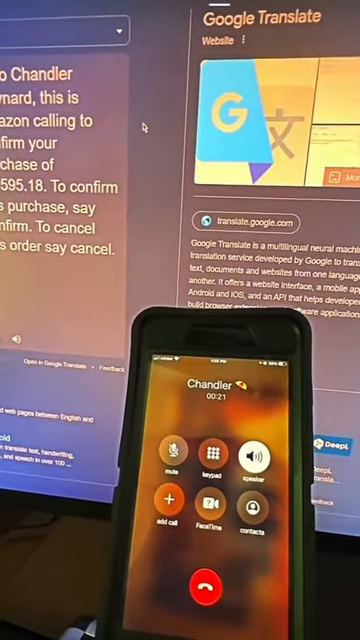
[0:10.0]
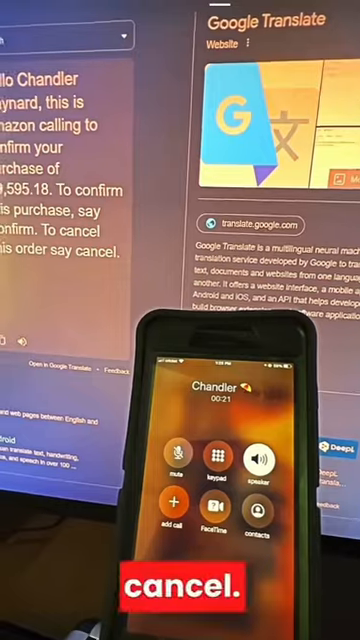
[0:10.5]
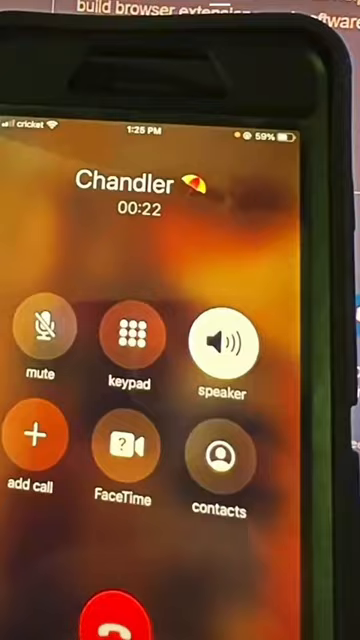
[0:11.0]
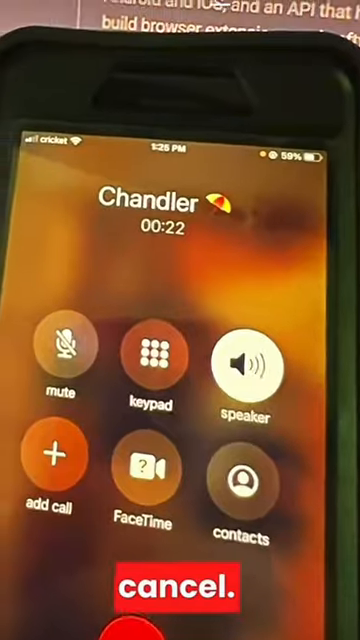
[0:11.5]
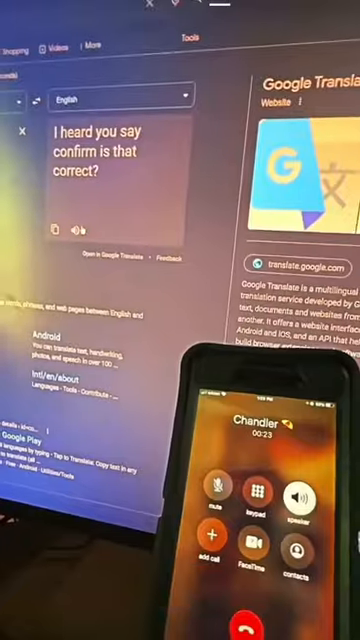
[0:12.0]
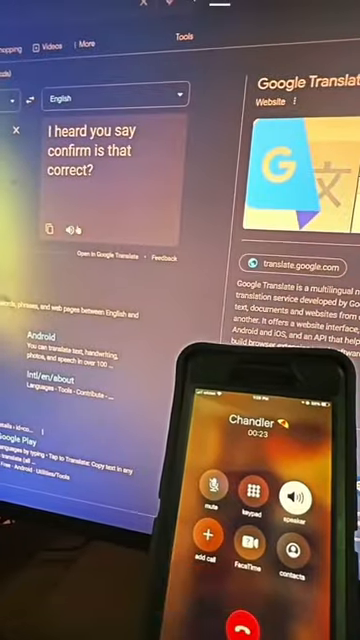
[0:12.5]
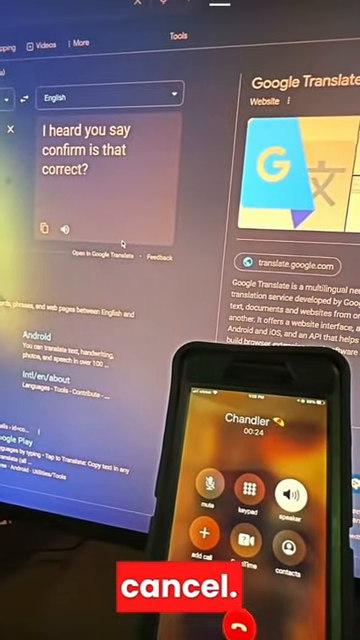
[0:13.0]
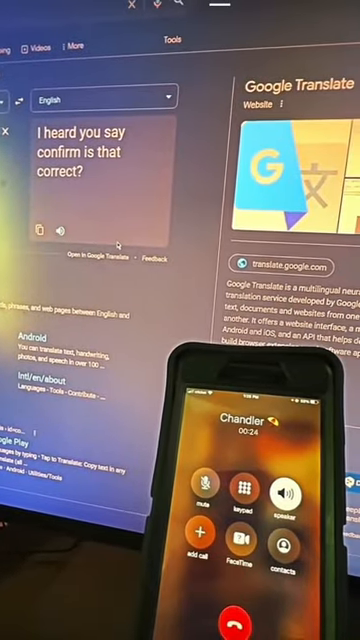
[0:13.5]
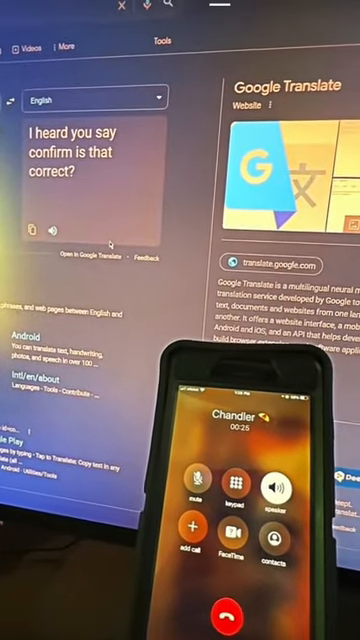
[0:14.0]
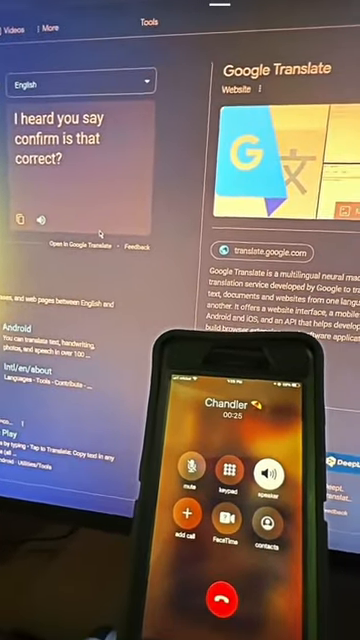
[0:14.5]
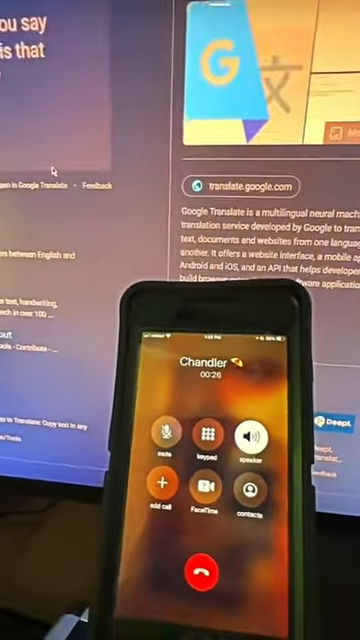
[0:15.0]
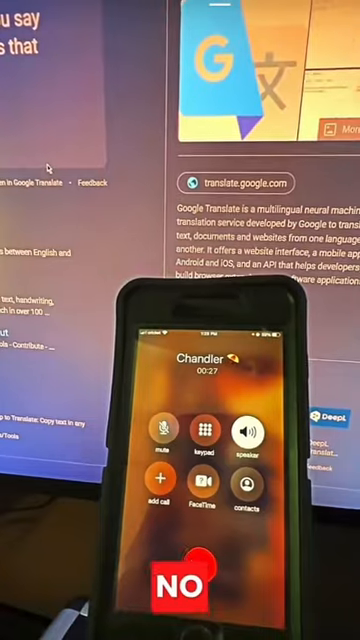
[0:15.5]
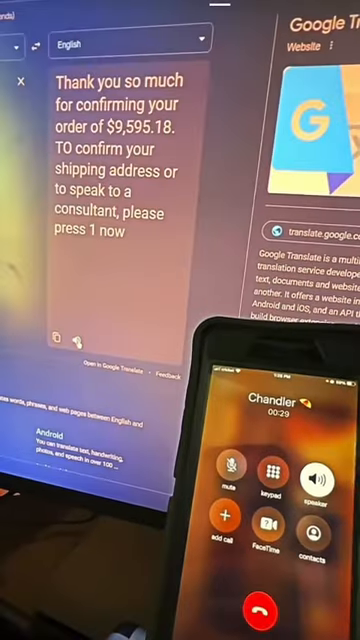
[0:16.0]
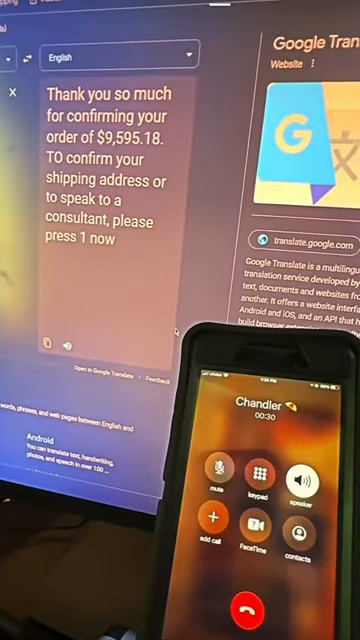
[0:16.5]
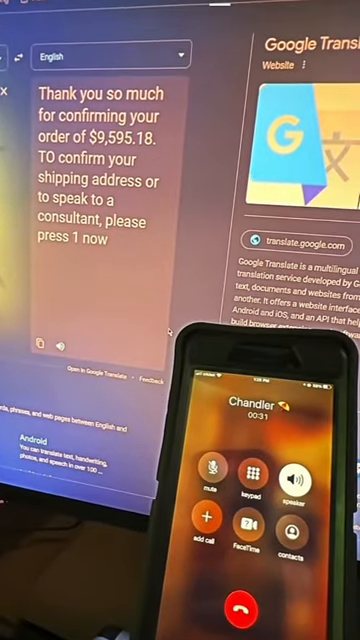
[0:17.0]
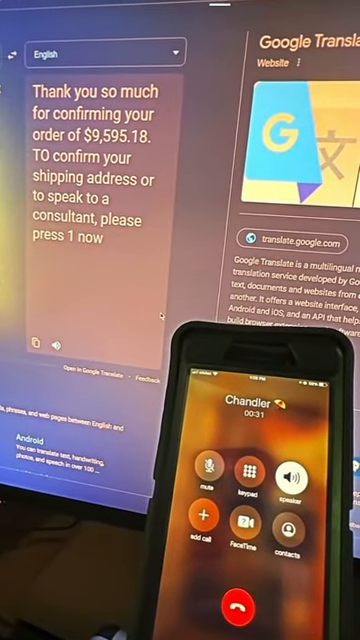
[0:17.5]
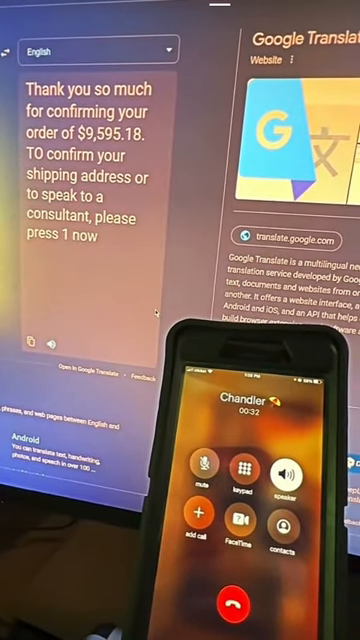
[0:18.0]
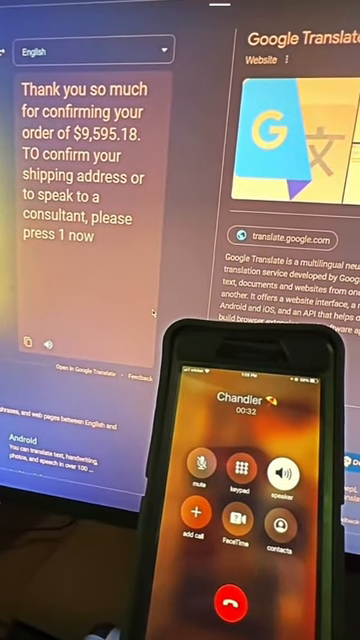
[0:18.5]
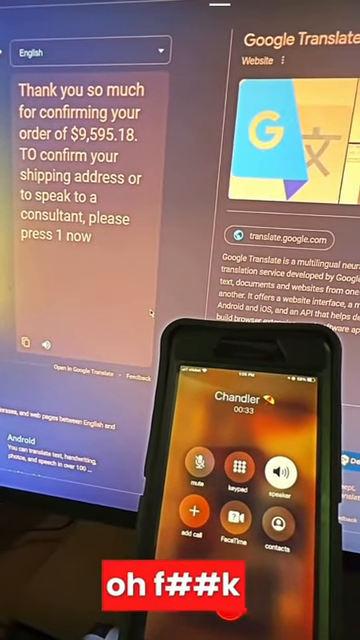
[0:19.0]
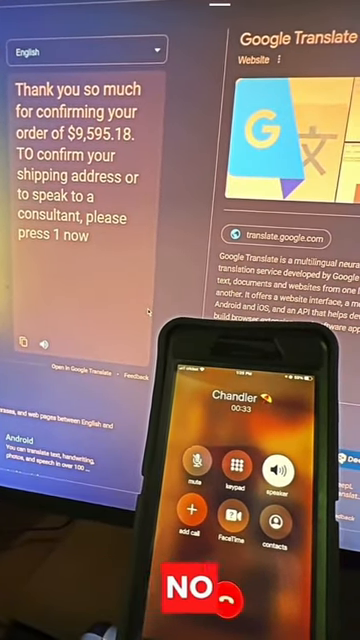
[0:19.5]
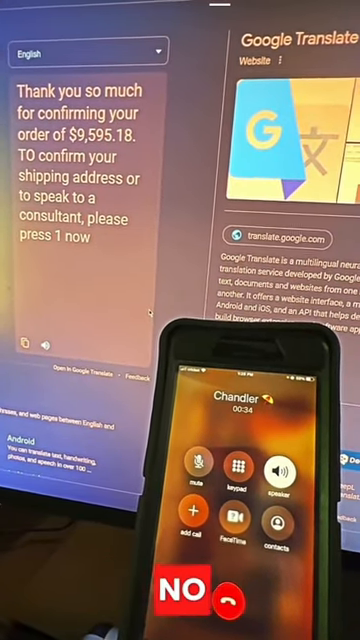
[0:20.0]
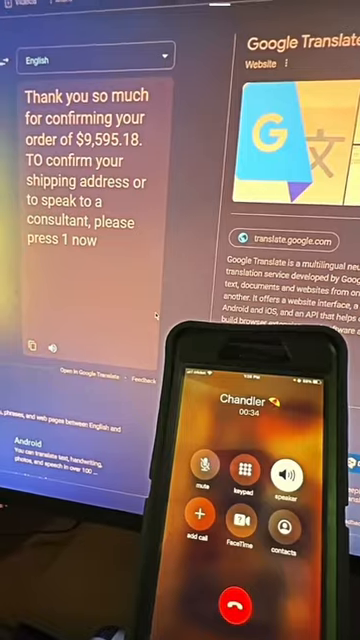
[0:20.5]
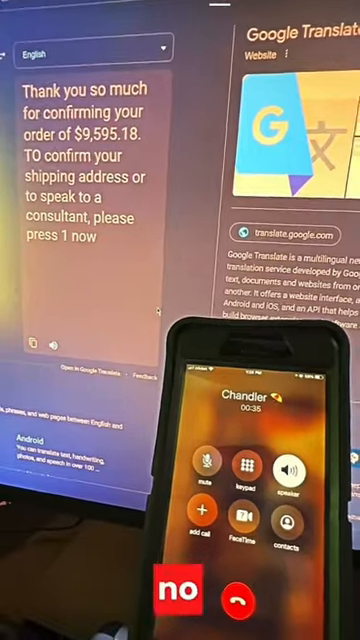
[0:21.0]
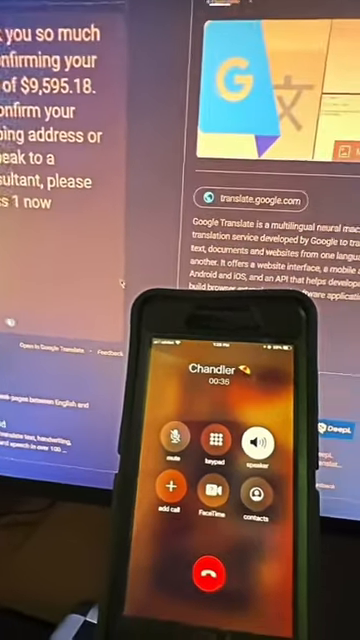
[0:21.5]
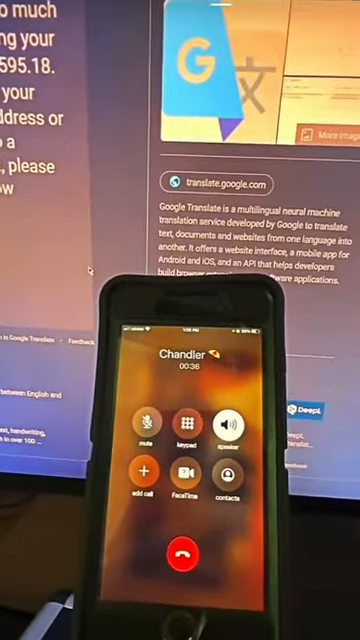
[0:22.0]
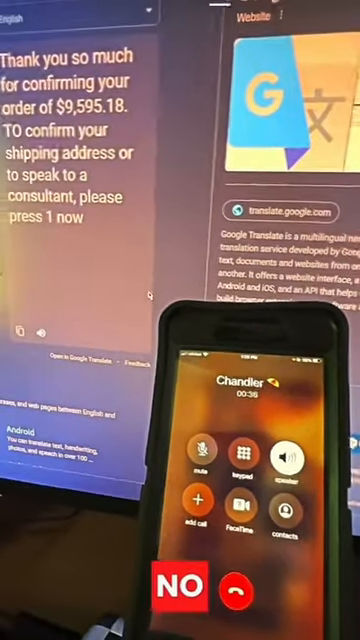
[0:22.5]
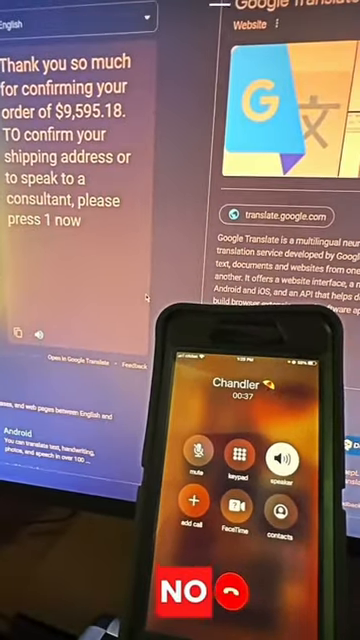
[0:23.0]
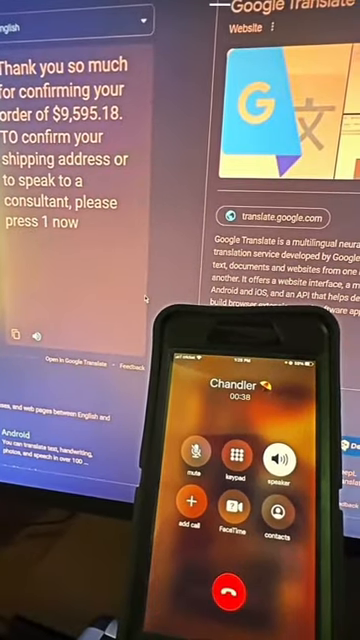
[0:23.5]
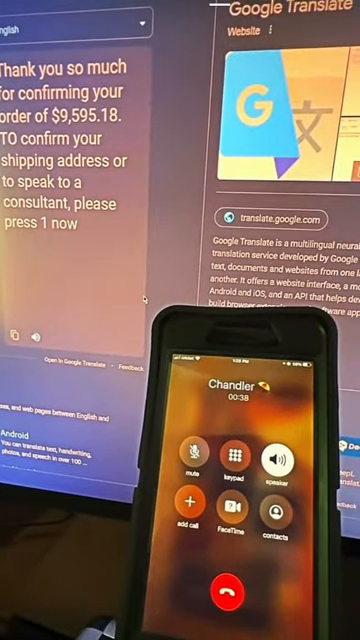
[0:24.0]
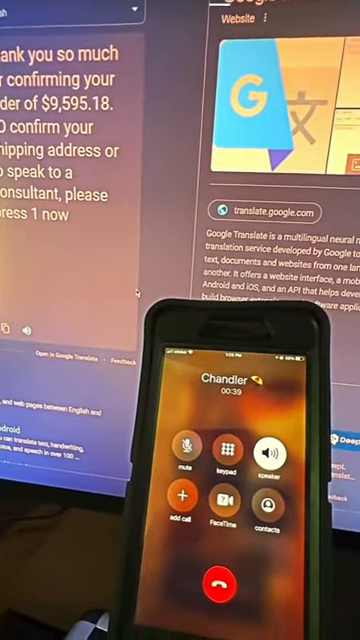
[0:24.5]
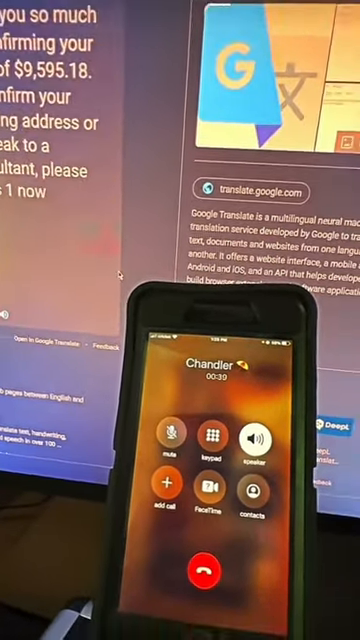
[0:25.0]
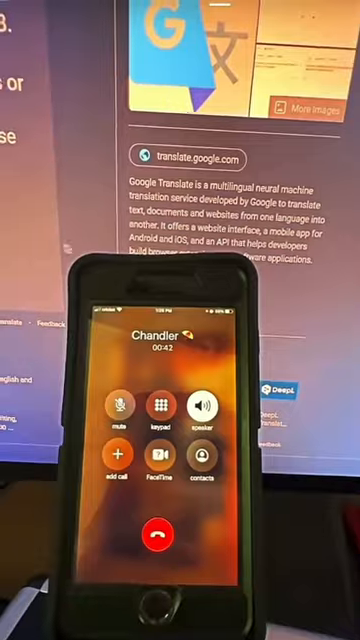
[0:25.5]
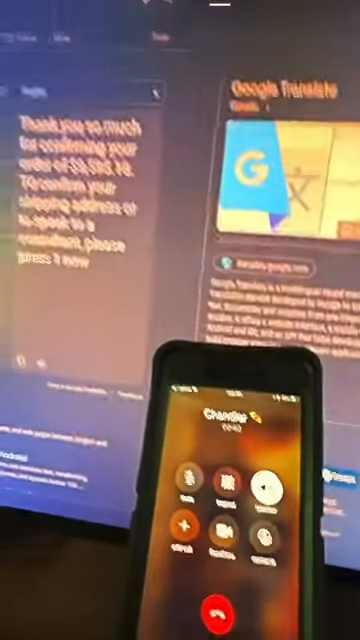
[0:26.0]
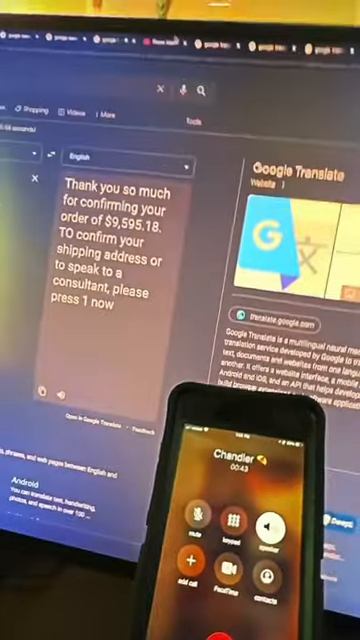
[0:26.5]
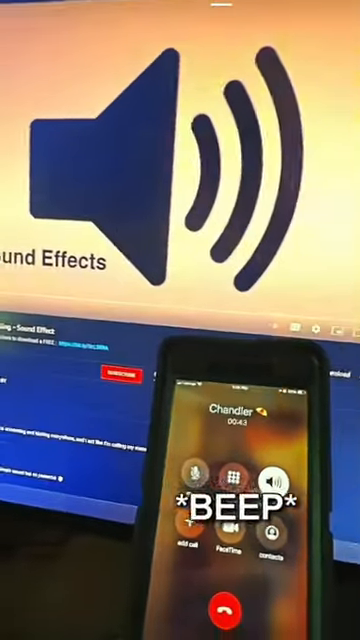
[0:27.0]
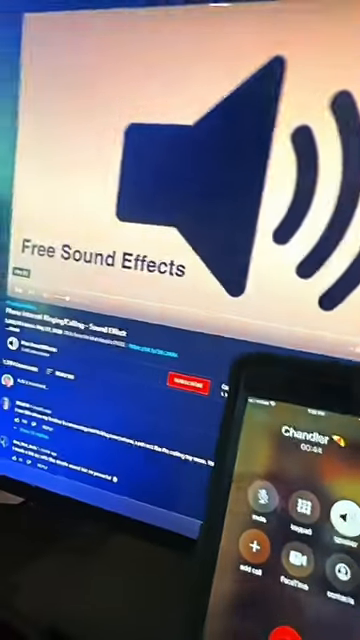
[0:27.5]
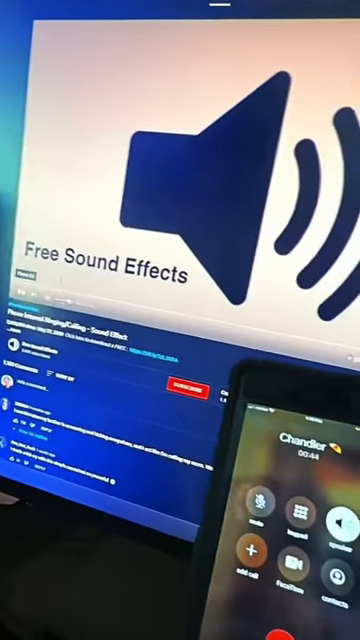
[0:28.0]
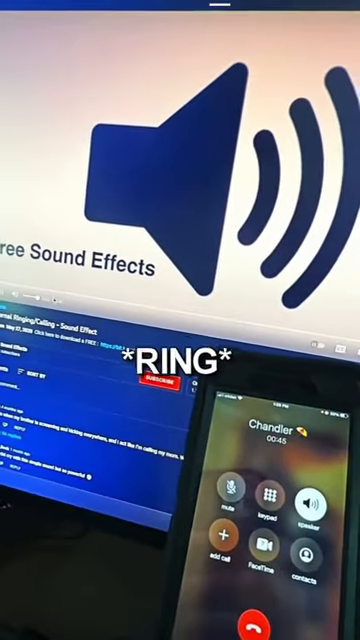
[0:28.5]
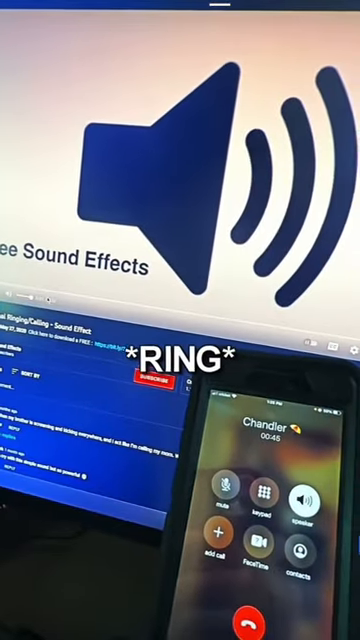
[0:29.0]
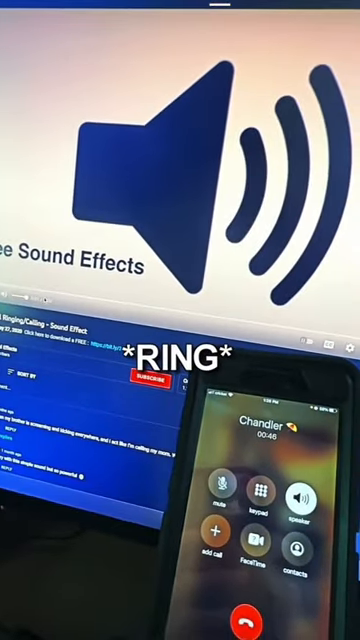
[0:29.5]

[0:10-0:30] Just after 21 seconds into the call, Chandler says "cancel", which appears in white on red. The computer then asks him, "I heard you say confirm, is that correct?" He says "cancel" again and again, each time shown in white on red, as the call reaches 23 seconds. After another "cancel", the screen says "thank you so much for confirming your order of $9,595.18 to confirm your shipping address or to speak to a consultant please press 1 now". He says "no", also shown in white on a red background, then says "oh fuck", which is spelled with an O, then an F, two hashes and a K. He says "no" again several more times as the call reaches 38 seconds. Something then says "beep" and "ring", and something about sound effects appears on screen as the call reaches 45 seconds.